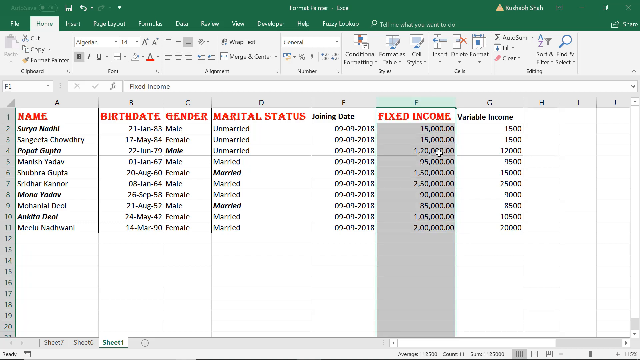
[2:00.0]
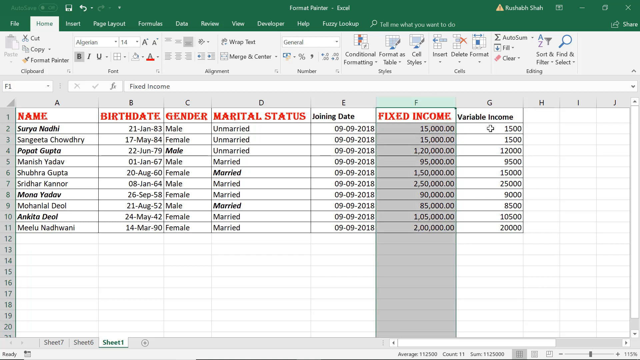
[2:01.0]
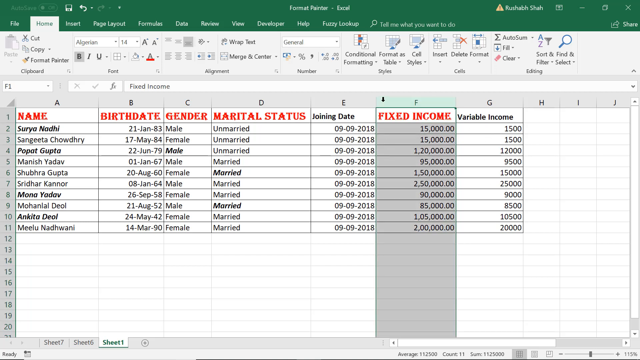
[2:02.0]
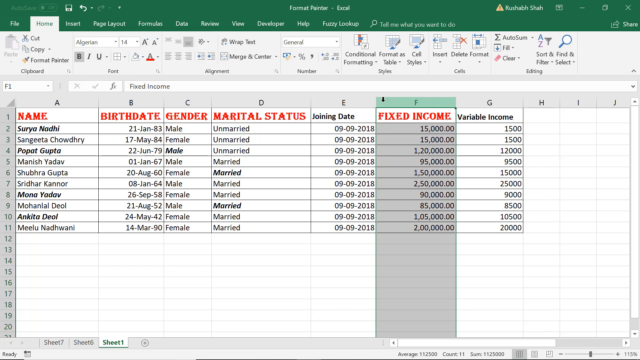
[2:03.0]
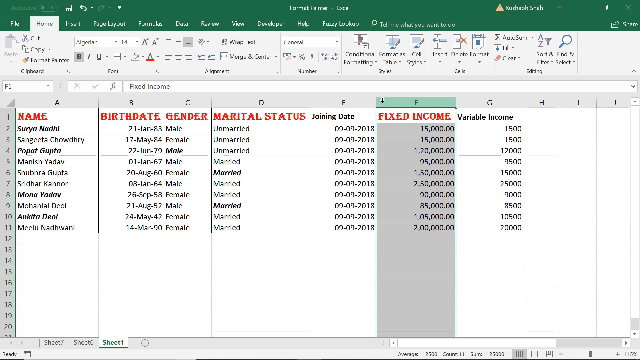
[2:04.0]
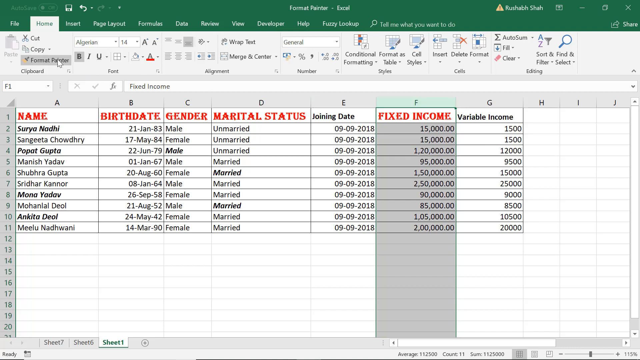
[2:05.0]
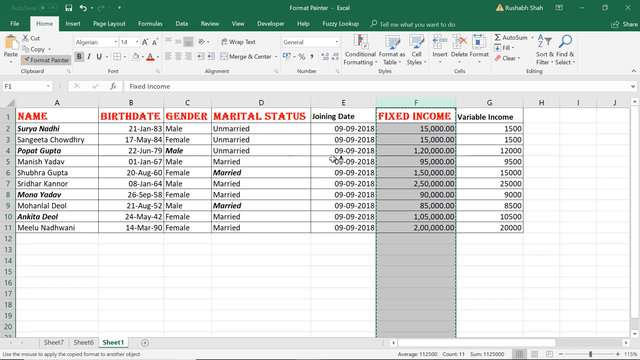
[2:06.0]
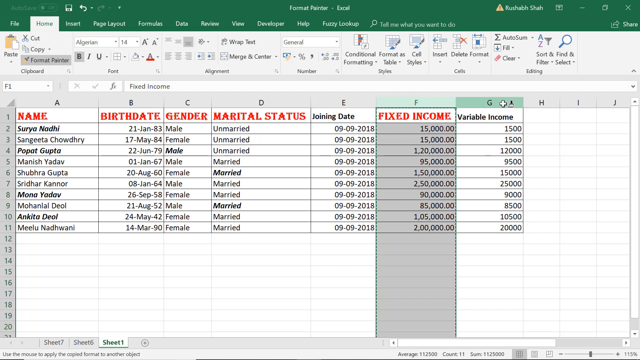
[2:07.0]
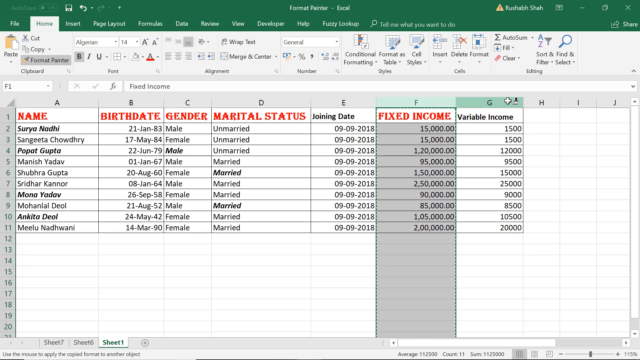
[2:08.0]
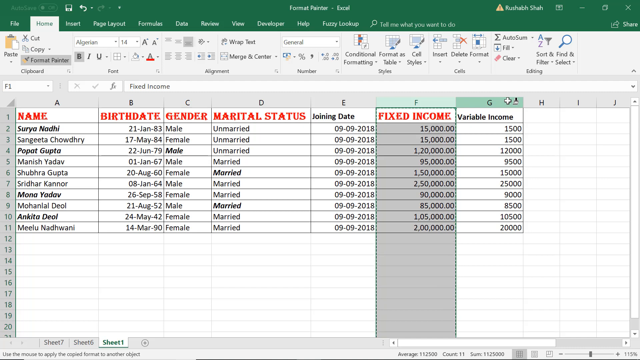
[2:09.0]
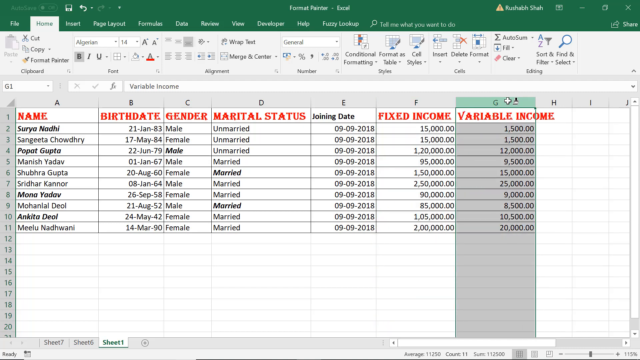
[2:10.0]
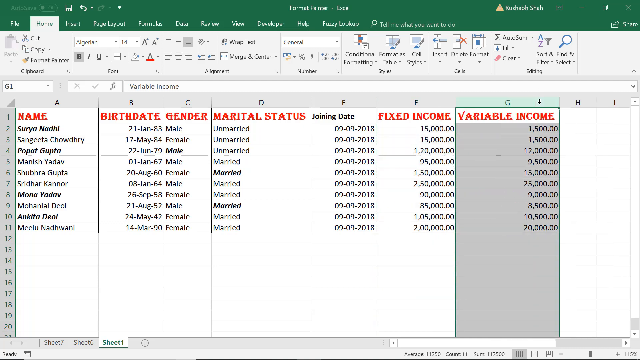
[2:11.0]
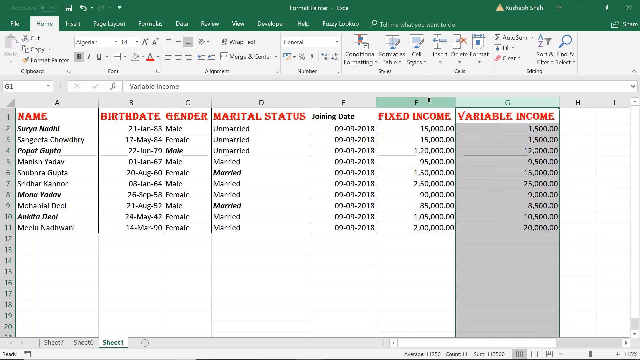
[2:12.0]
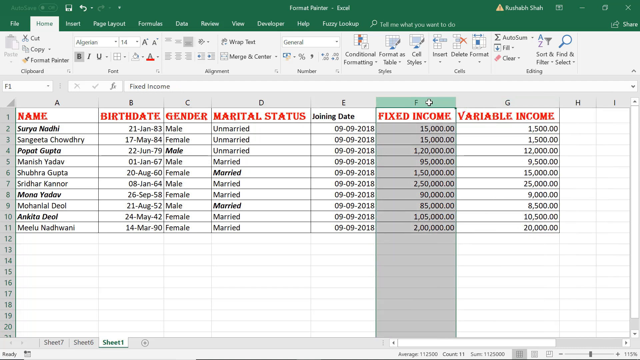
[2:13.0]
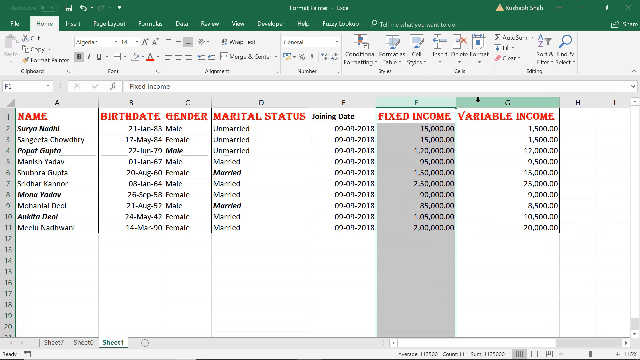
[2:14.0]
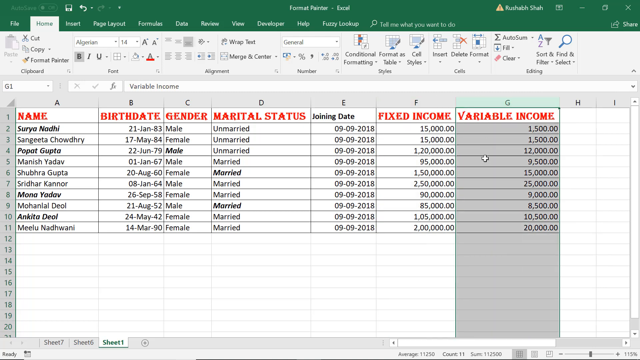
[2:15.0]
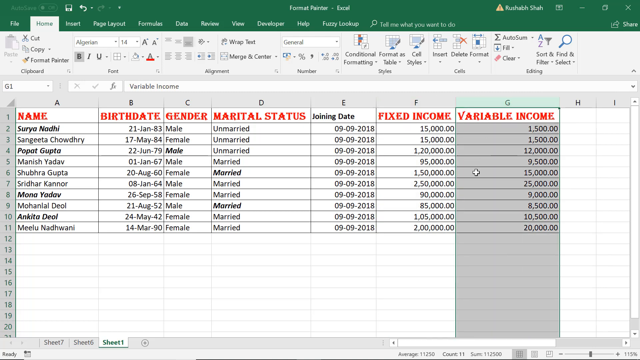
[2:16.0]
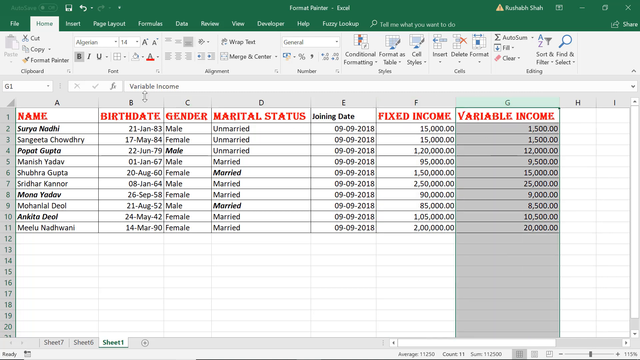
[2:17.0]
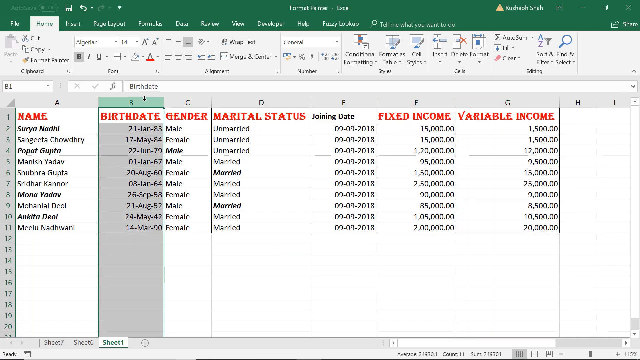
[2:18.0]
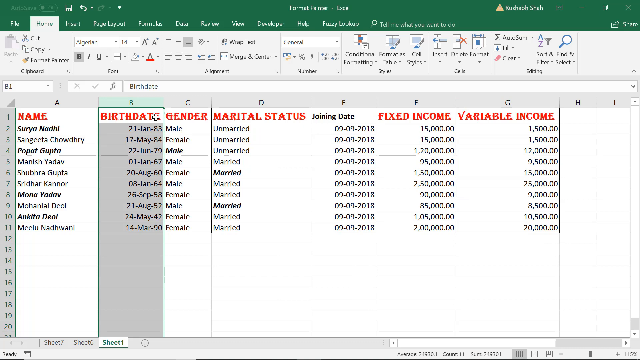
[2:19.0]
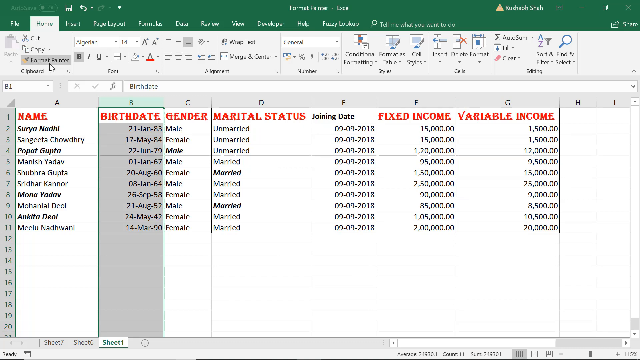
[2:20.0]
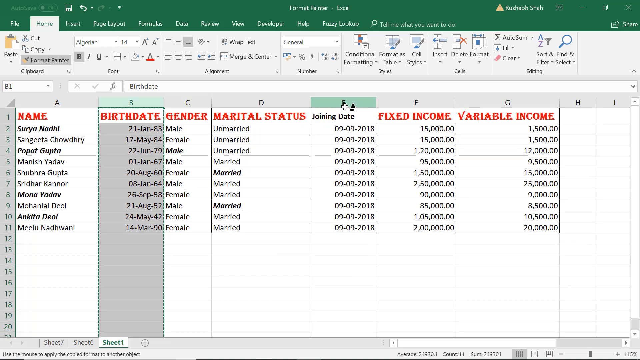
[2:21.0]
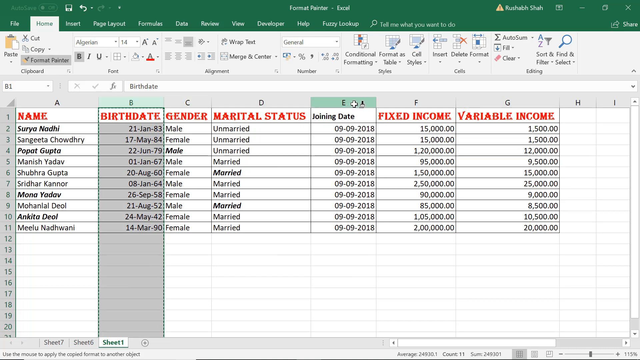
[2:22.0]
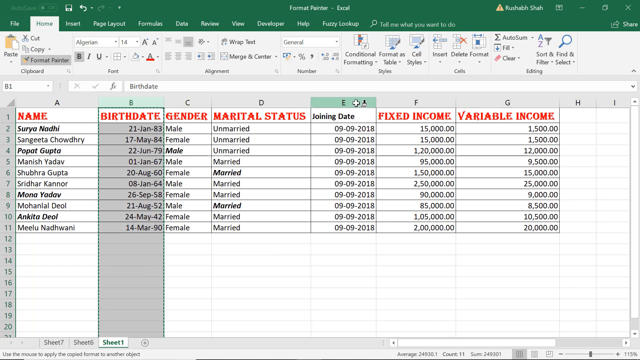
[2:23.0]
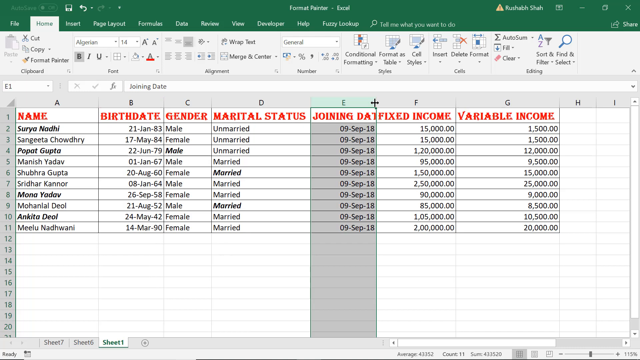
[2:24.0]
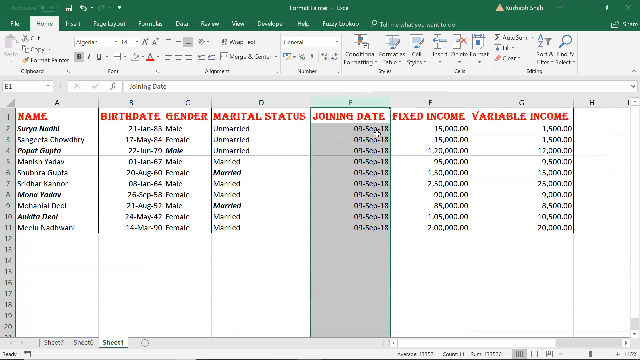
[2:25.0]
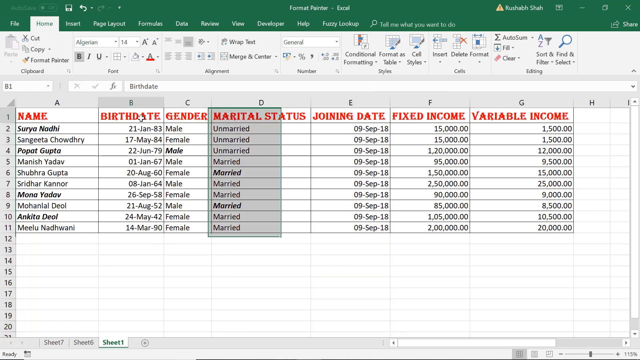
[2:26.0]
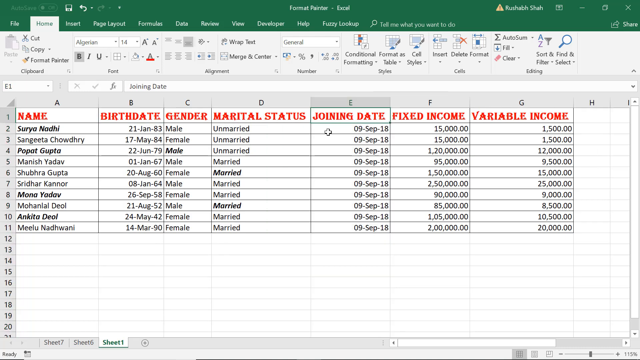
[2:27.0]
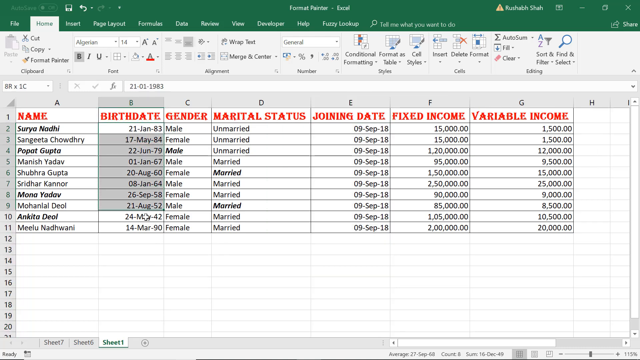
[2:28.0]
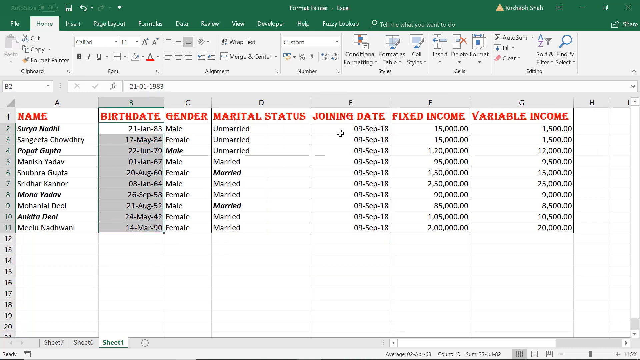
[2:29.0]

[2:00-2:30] The entire column under F is highlighted, with all its cells selected, and the fixed income header has been changed to the red font used previously with Format Painter. The user switches back and forth with Format Painter, going to column G, titled variable income, and changes it to the larger red font selected earlier. The user appears to select all the cells but does not change them. The user then goes to the column under birth date, and then to joining date, changing the joining date title to the red font.